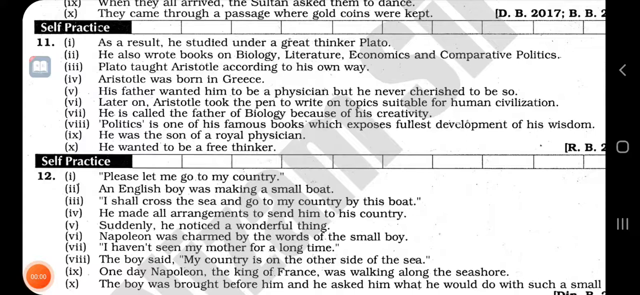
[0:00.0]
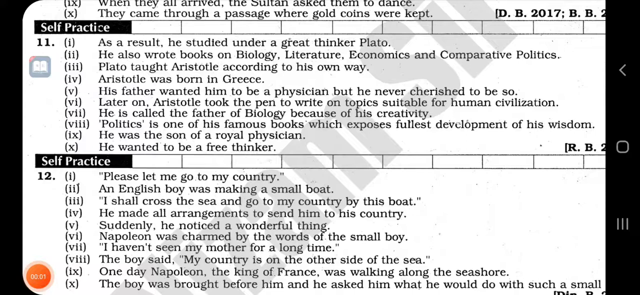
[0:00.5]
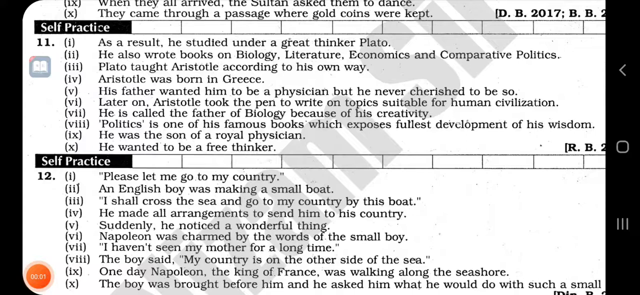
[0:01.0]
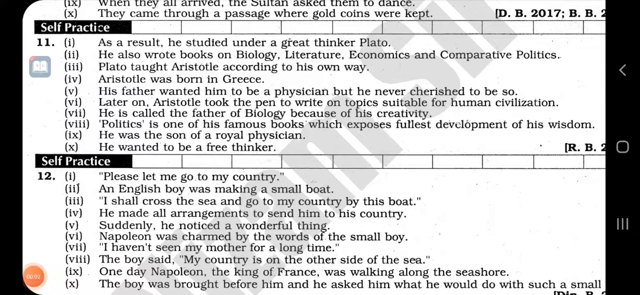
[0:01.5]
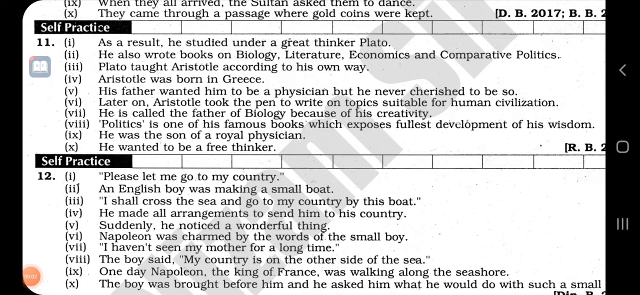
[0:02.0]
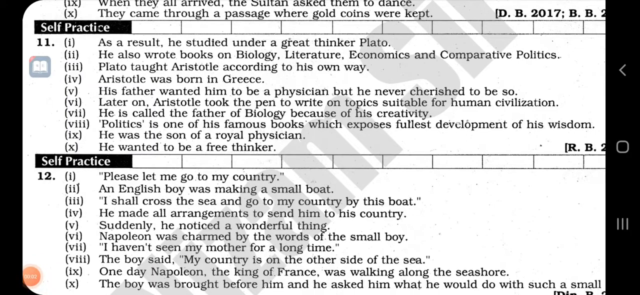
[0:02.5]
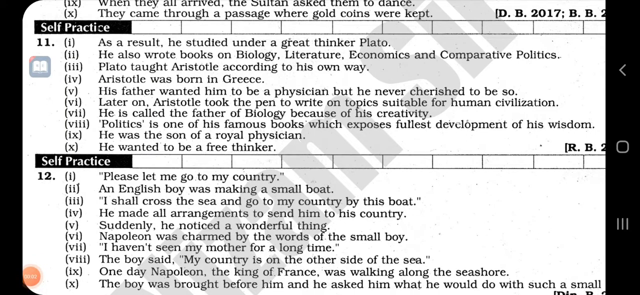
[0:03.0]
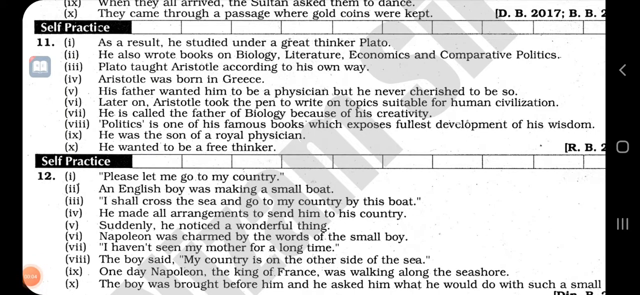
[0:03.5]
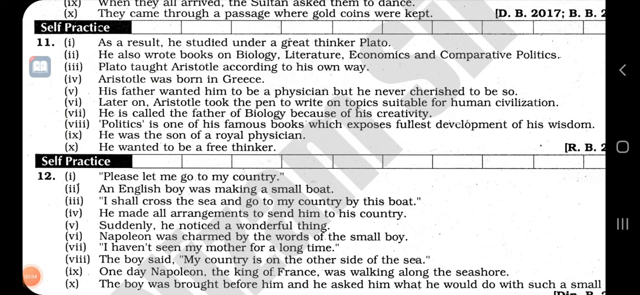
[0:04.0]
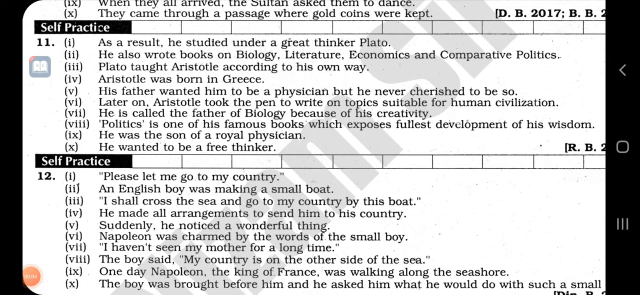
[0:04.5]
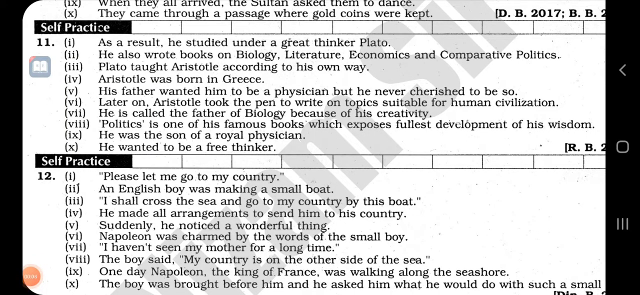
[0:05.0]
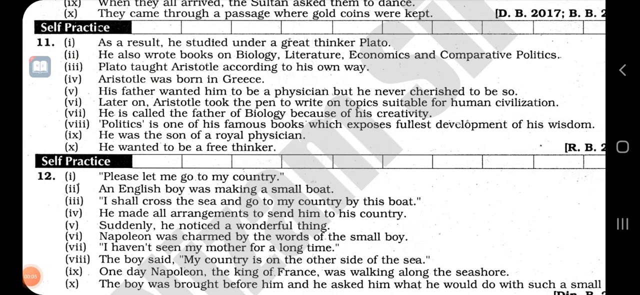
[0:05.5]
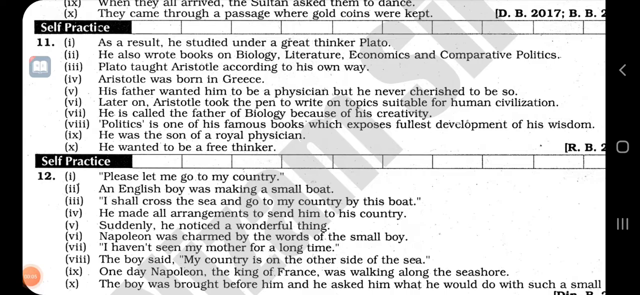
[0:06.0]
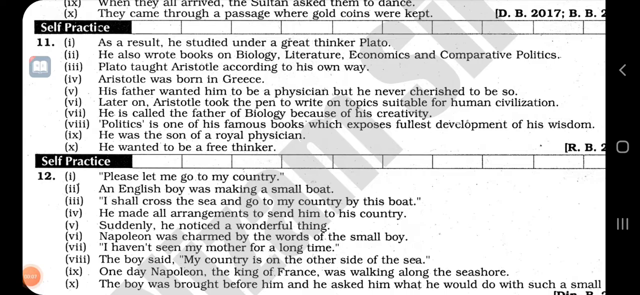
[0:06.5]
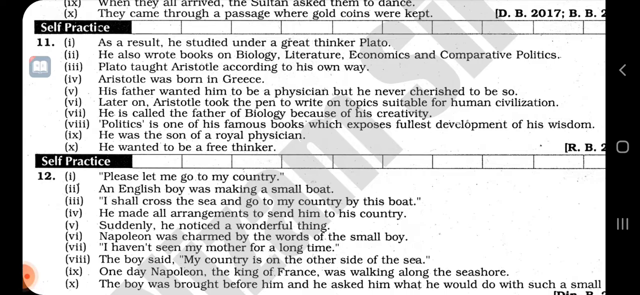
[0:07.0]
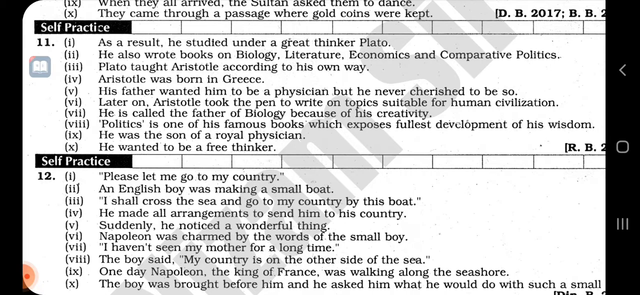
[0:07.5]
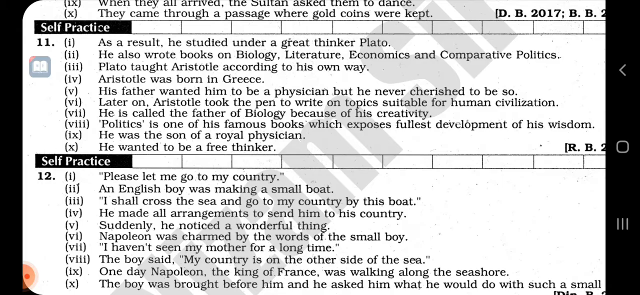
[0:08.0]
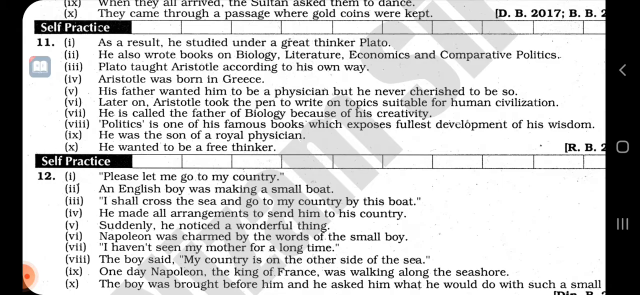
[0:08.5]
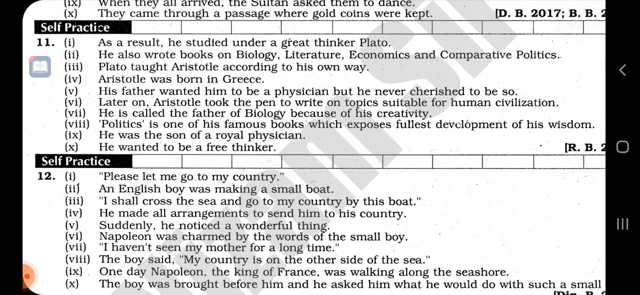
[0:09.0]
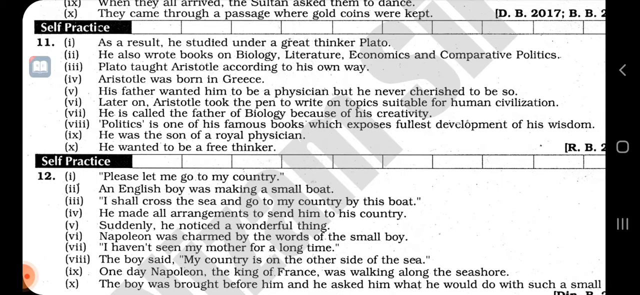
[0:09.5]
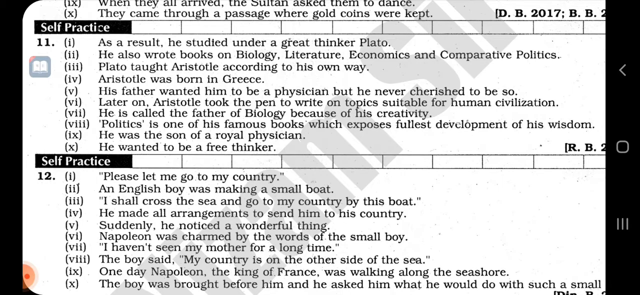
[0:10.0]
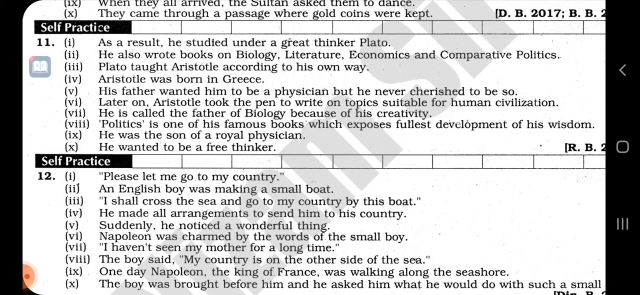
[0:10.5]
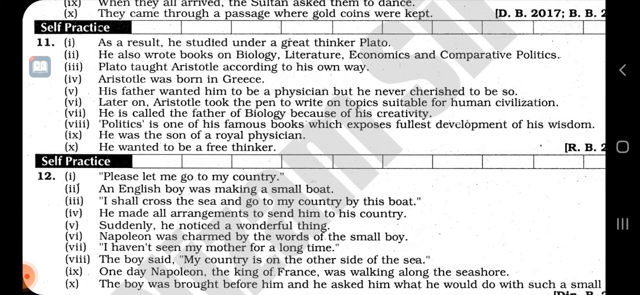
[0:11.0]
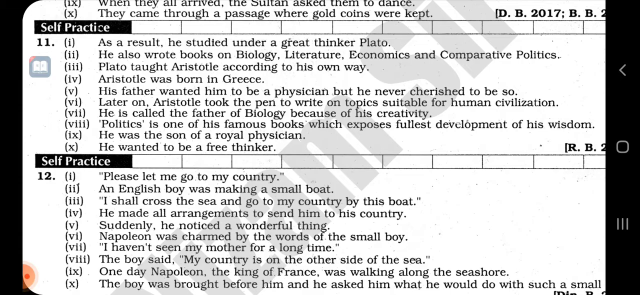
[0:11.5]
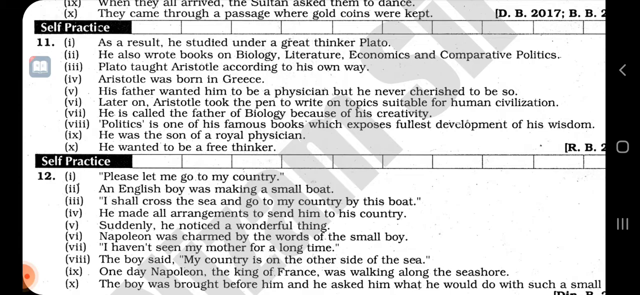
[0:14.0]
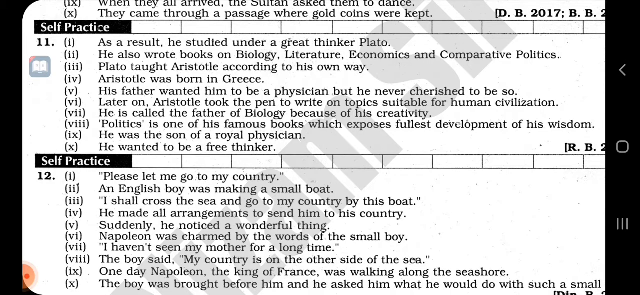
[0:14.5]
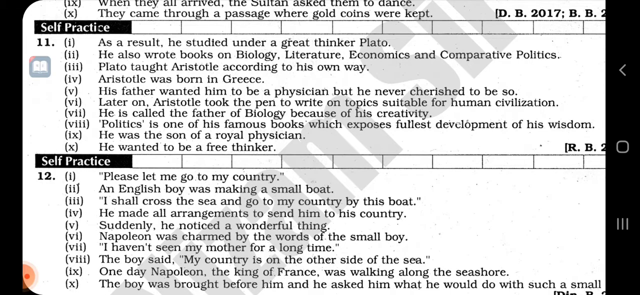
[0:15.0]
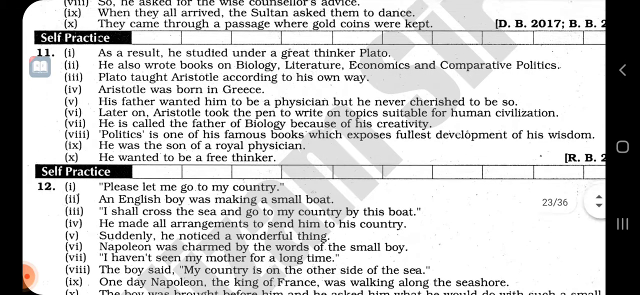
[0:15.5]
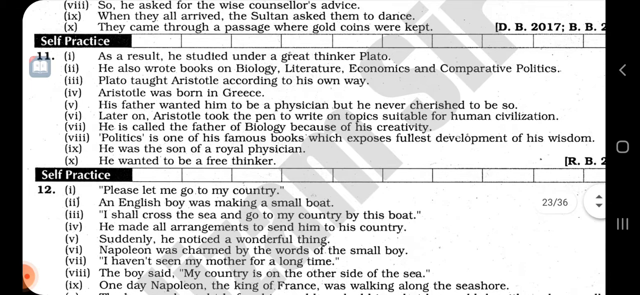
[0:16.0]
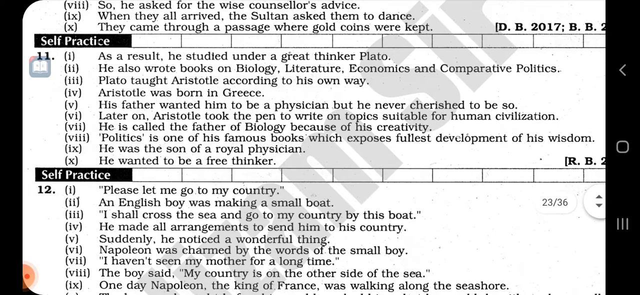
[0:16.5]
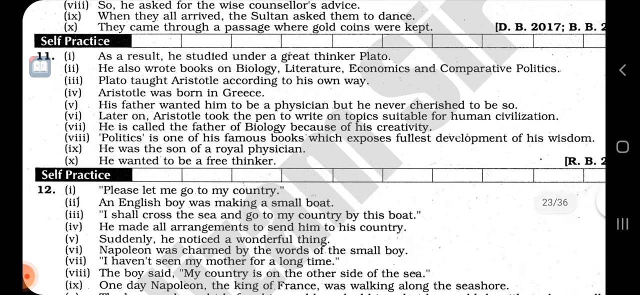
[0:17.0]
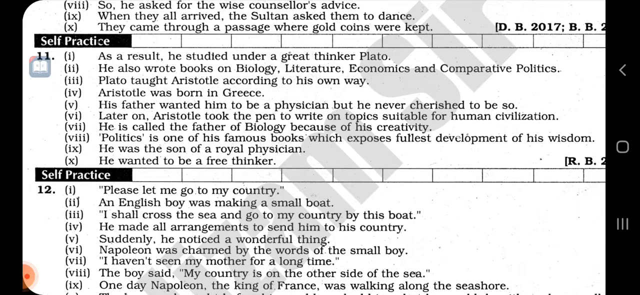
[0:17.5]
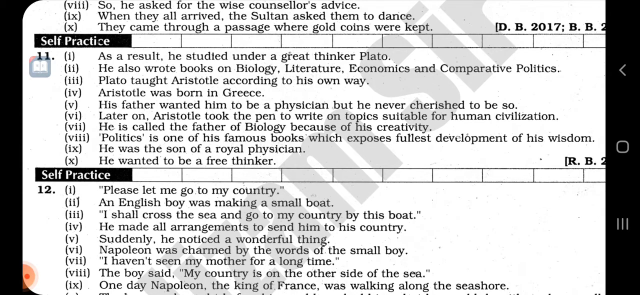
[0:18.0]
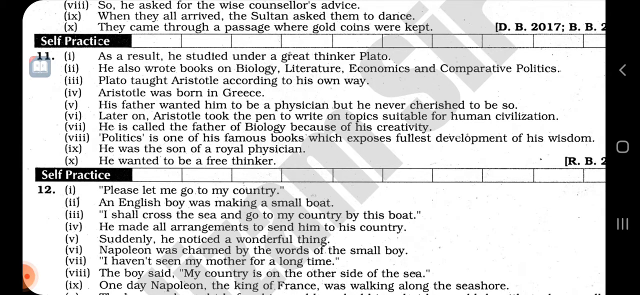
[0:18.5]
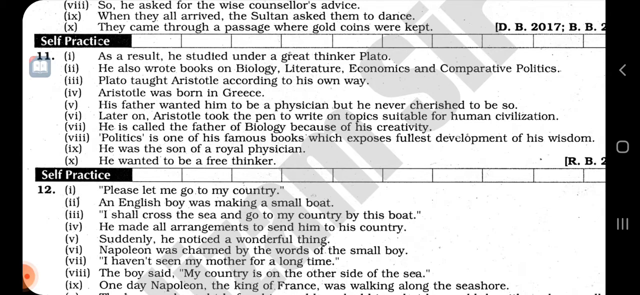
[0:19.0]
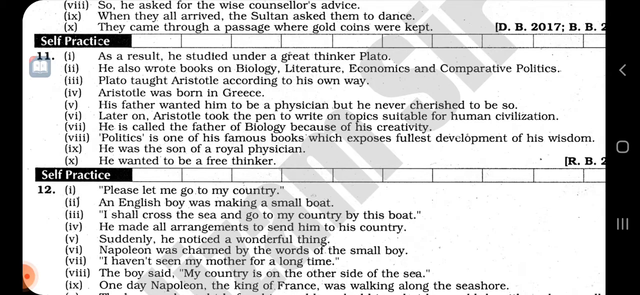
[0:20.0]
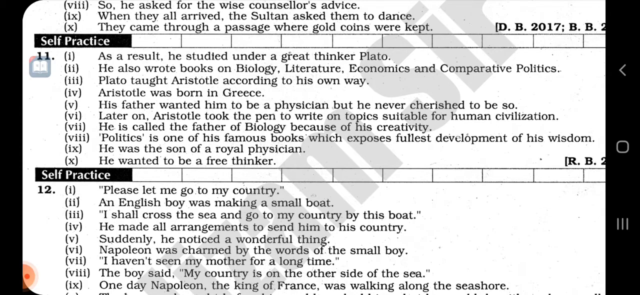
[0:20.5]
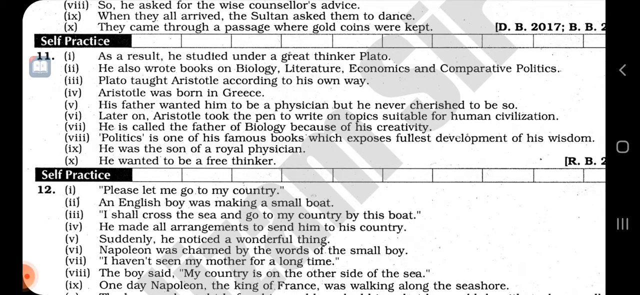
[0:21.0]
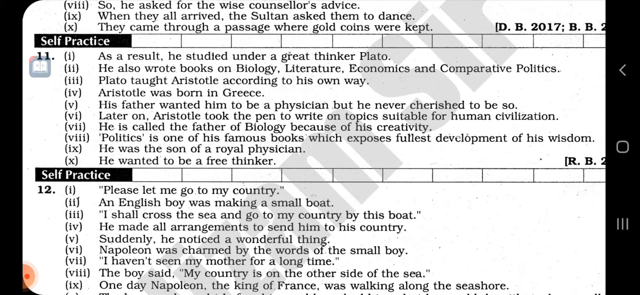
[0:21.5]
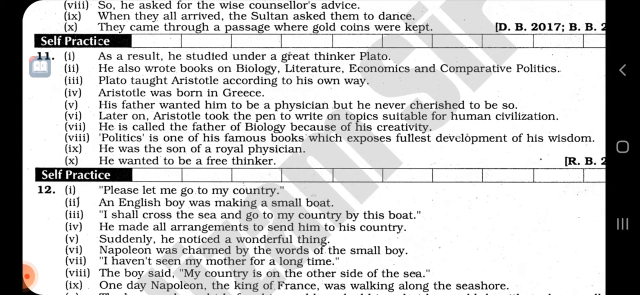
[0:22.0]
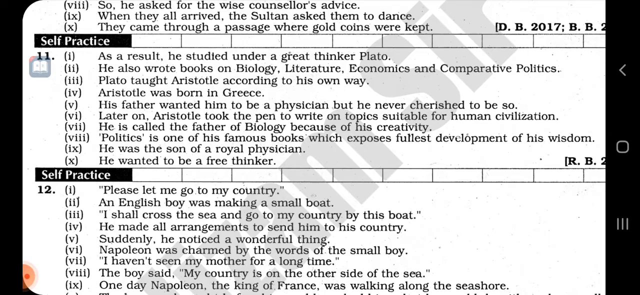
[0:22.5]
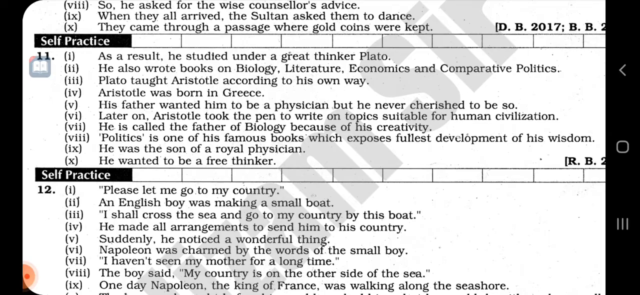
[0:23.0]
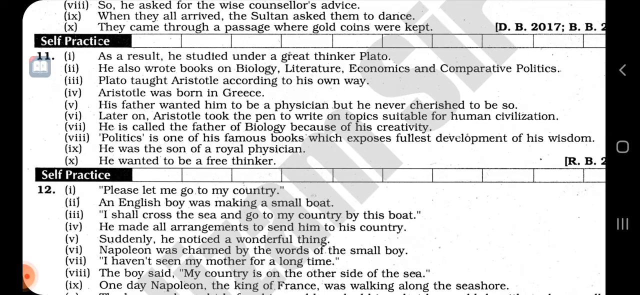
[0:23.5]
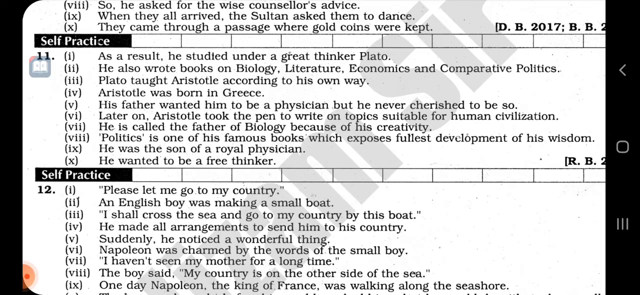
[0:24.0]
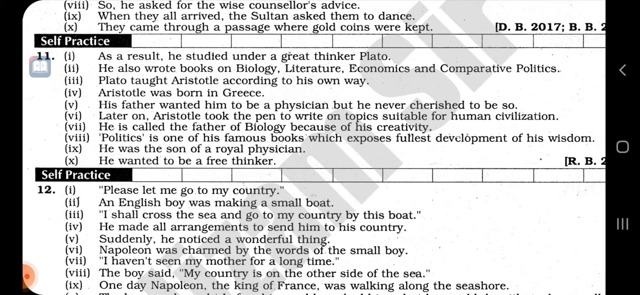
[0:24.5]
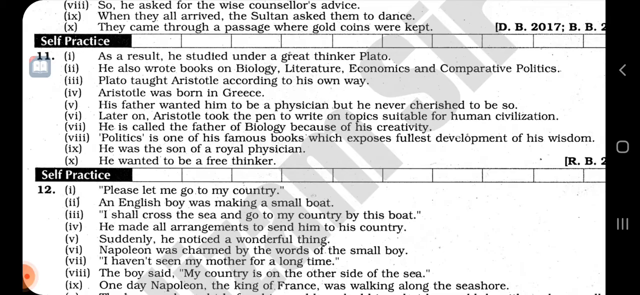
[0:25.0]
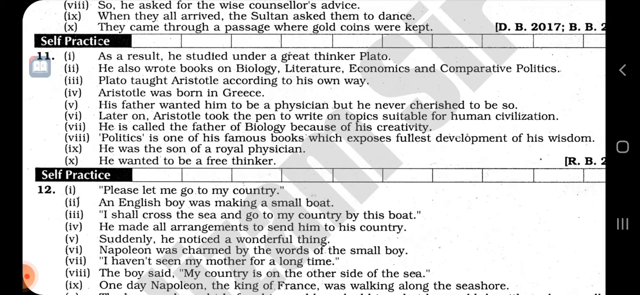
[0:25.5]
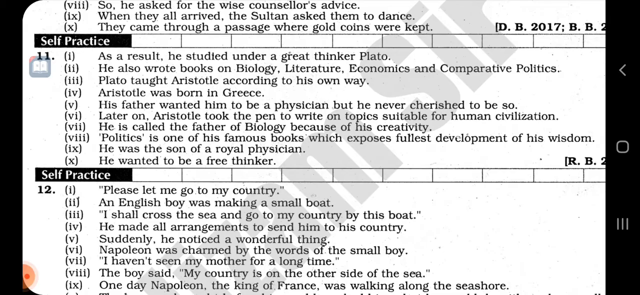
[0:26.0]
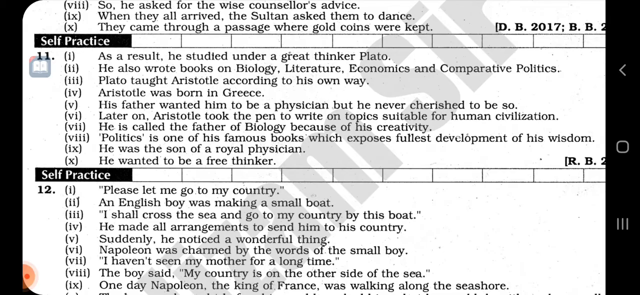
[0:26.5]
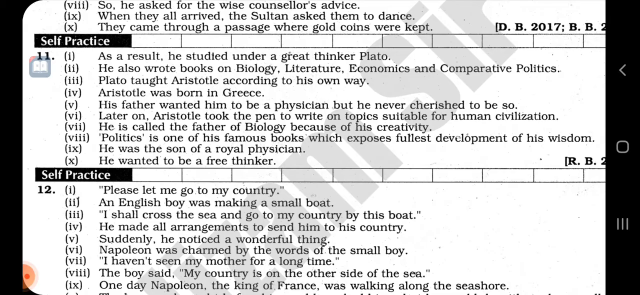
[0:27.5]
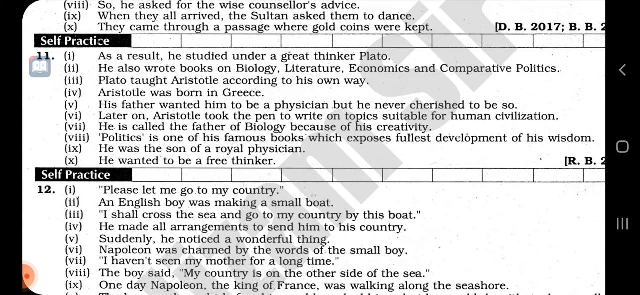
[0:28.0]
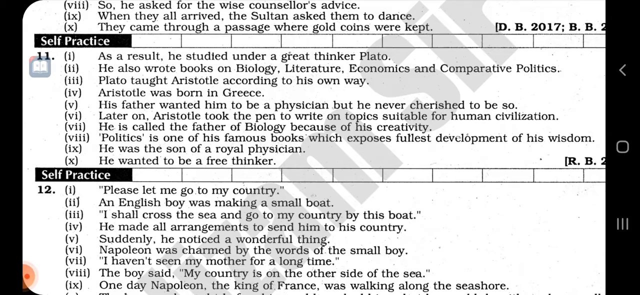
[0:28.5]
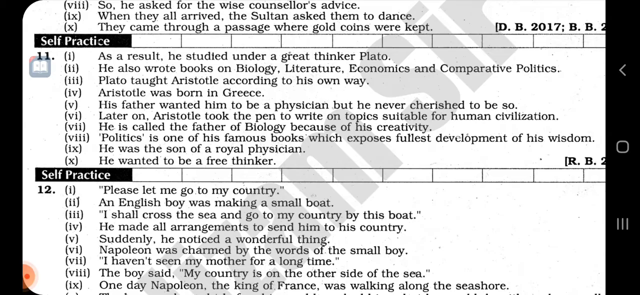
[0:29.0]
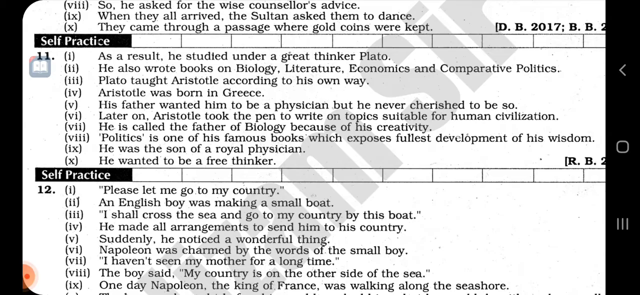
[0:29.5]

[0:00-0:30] A self-practice test appears as white paper on a black background, showing questions 11 and 12 with 10 different answer options each. To the right of each question there is apparently either the answers or a reference. The view scrolls up slightly, revealing big grey words that run diagonally from bottom left to top right through the middle of the test, and then the test scrolls slightly down. A banner on the right suggests the video may have been recorded on a phone, seemingly held in landscape mode to view the test. The test appears to be about a philosopher, Aristotle, and what he was known for, with question 12 apparently covering things he may have said. The options are numbered with Roman numerals.